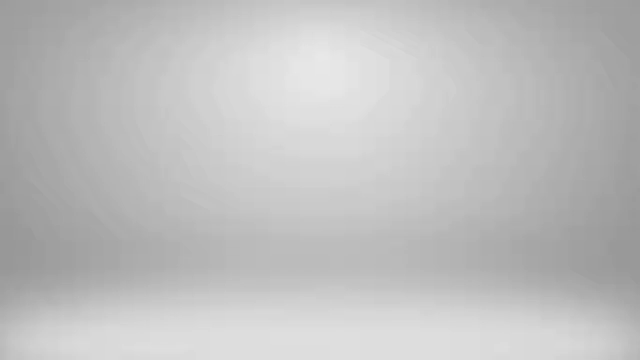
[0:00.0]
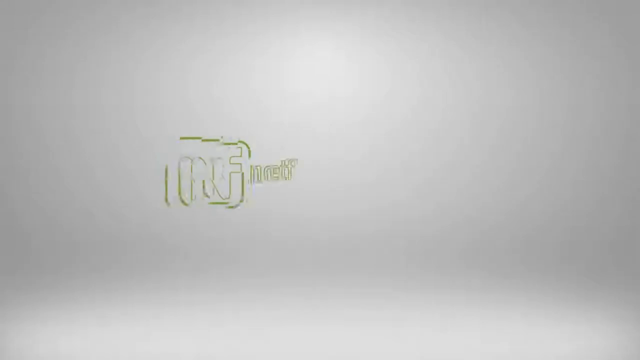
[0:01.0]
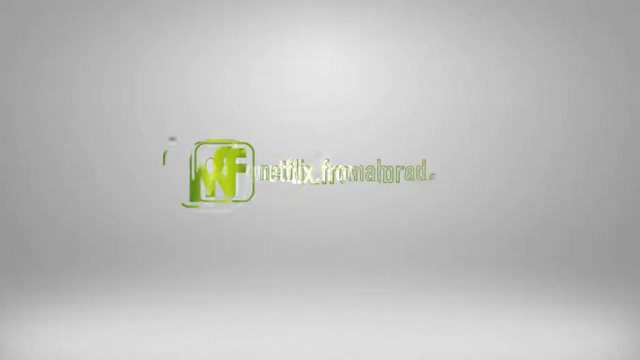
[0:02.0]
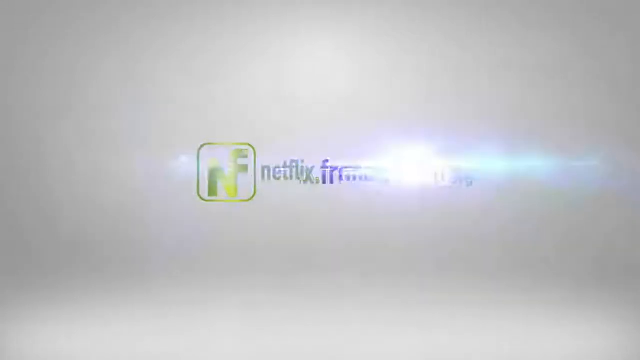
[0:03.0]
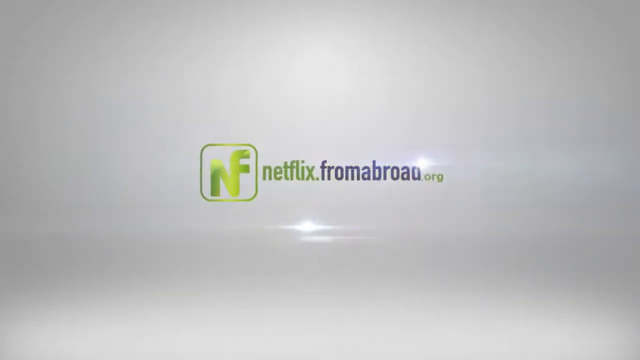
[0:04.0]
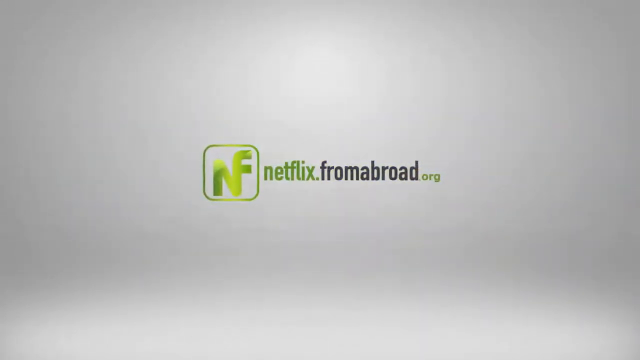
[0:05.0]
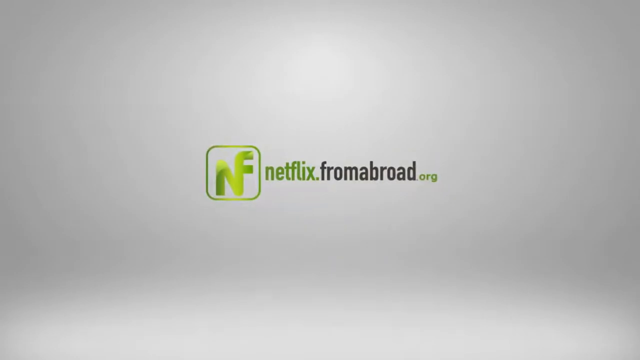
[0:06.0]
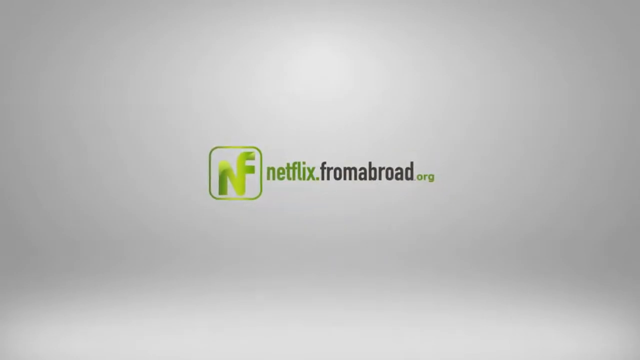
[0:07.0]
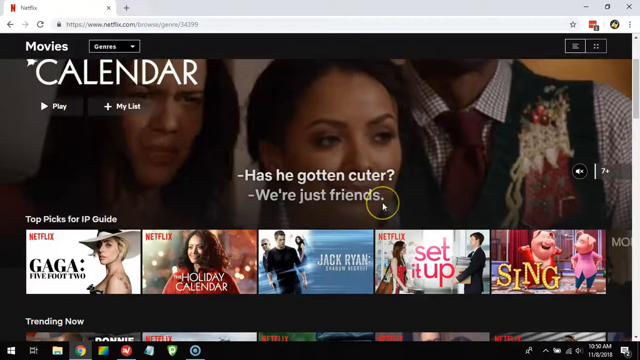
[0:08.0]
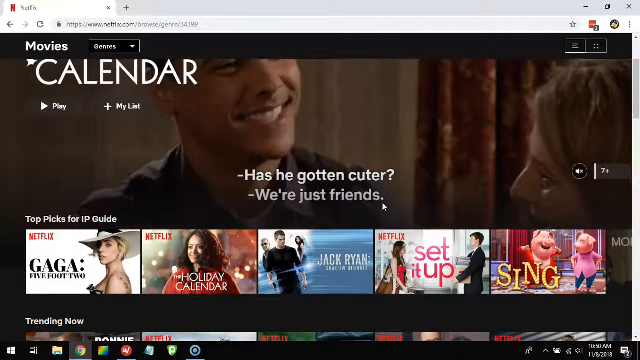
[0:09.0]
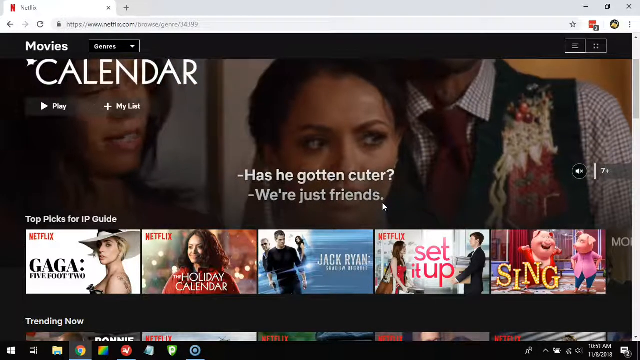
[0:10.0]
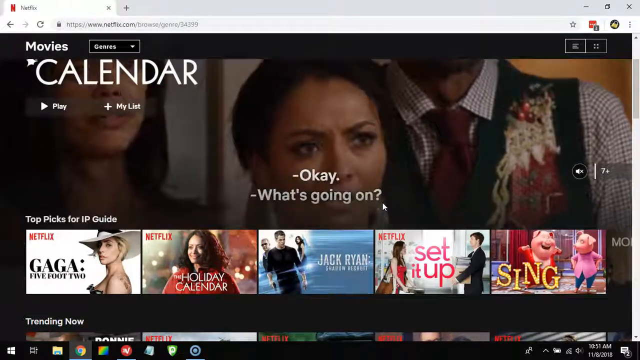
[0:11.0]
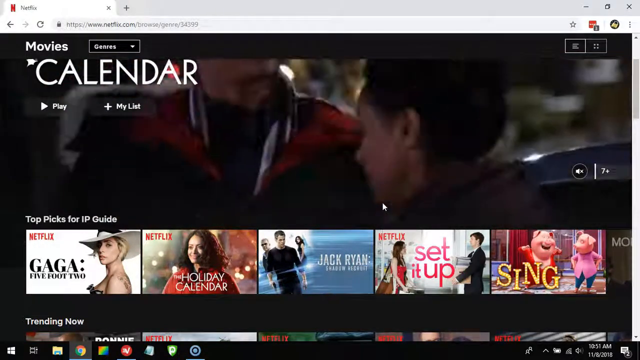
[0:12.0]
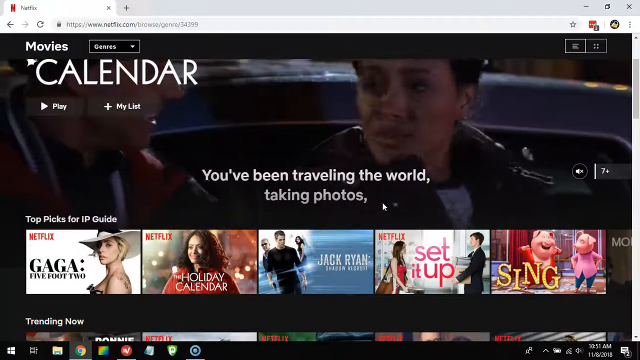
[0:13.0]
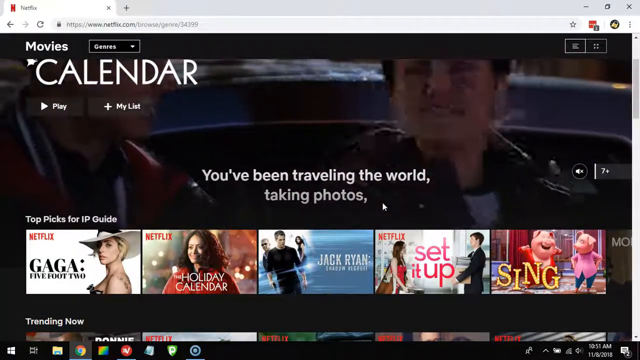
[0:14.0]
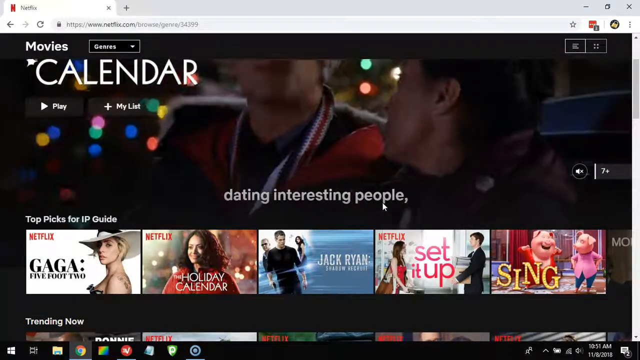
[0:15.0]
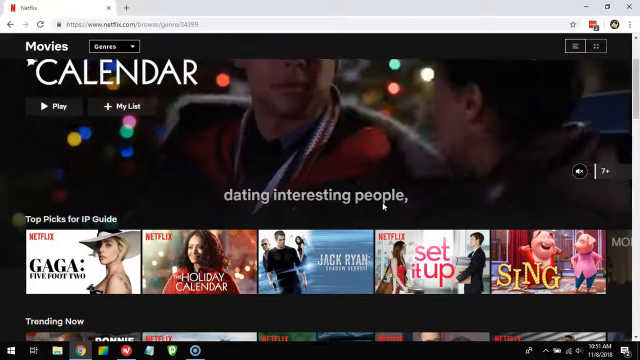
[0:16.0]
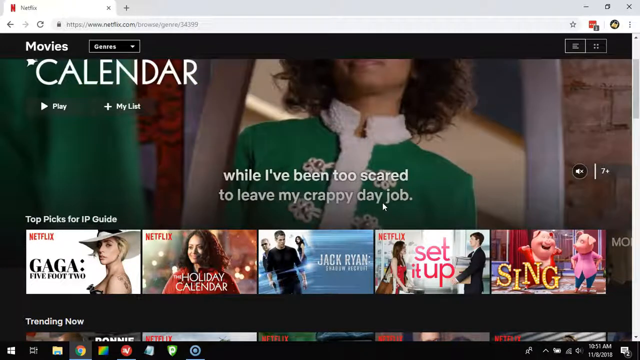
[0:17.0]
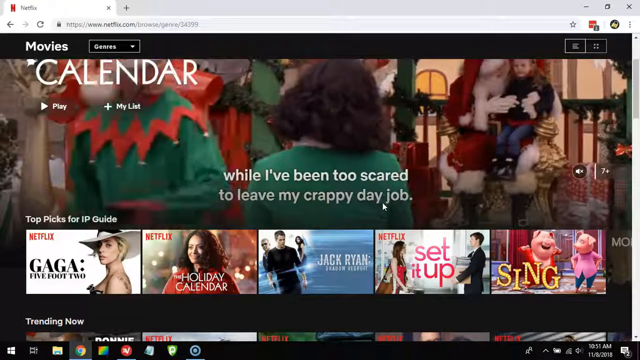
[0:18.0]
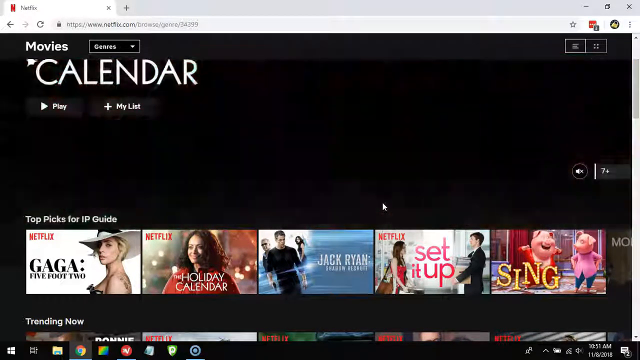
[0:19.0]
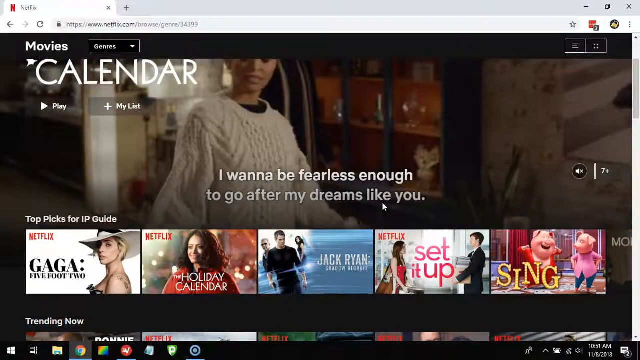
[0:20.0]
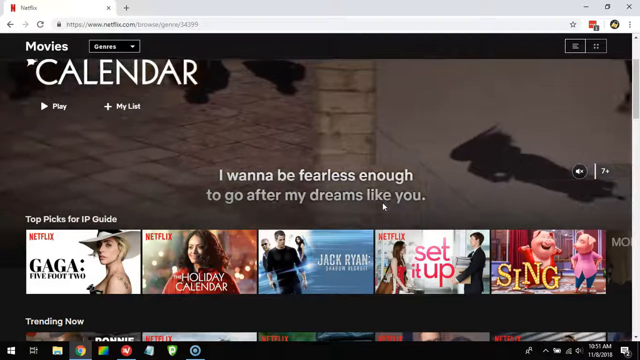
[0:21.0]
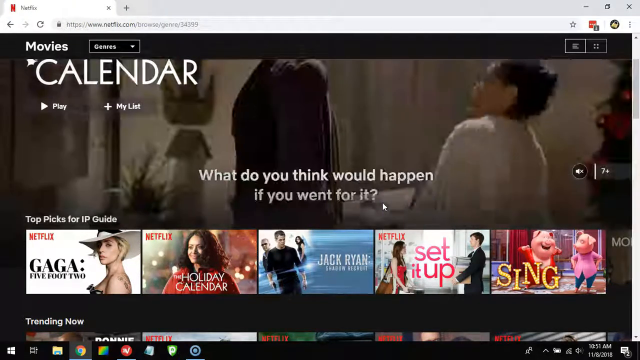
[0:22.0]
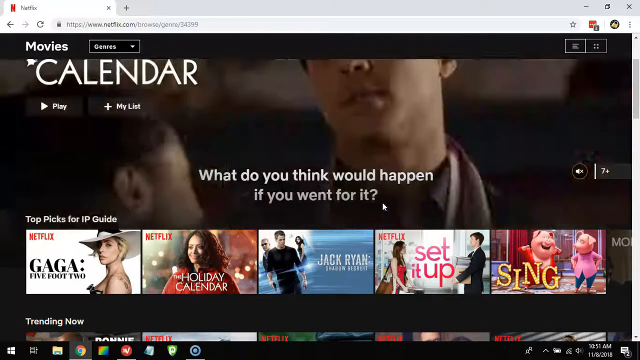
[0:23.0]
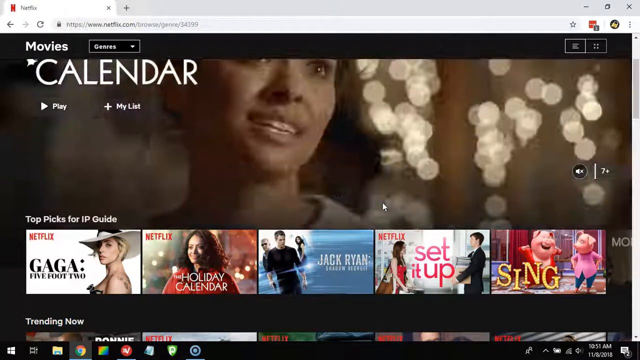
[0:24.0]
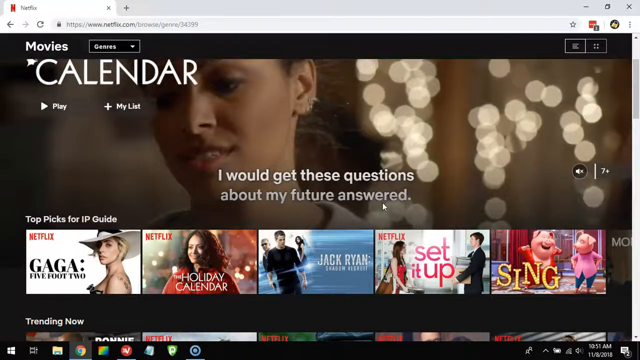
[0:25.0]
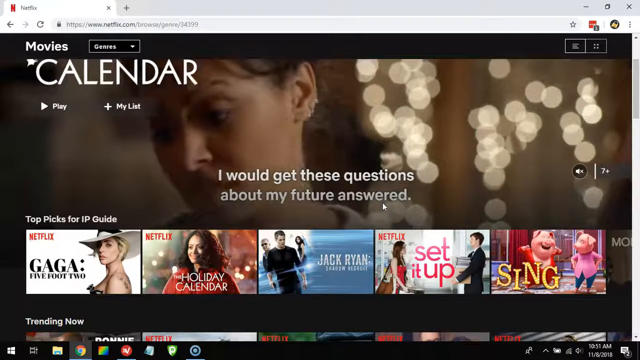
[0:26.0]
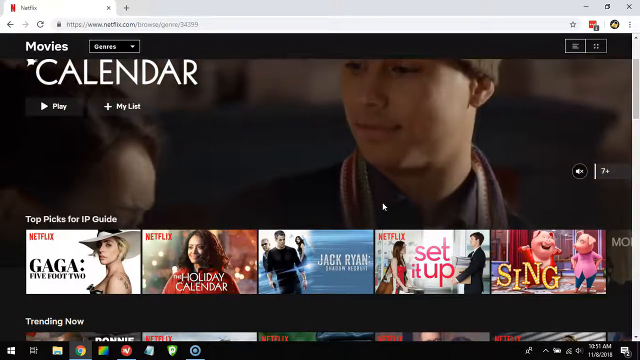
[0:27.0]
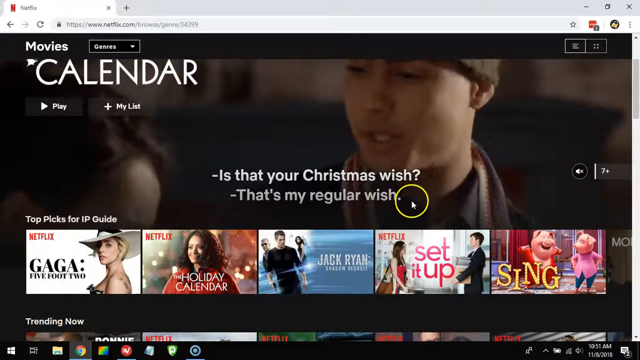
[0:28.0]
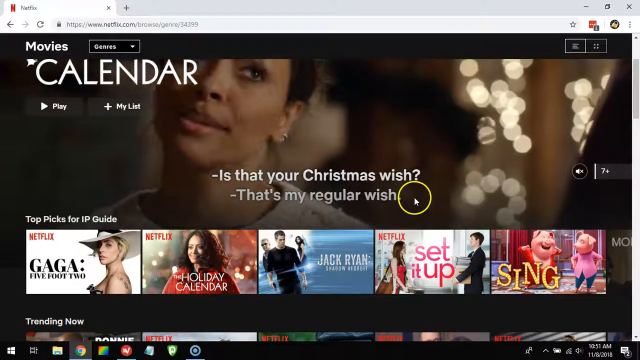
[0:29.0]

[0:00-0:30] A short intro sequence with a logo for netflix.fromabroad.org opens the video, followed by what looks like the Netflix homepage for browsing movies, with a genres button. A preview of The Holiday Calendar plays with subtitles. Categories are laid out to browse, the first being "top picks for IP guide," with selections including Gaga, The Holiday Calendar, Jack Ryan, Set It Up and Sing. Someone moves the mouse, and the cursor is visible. The site looks like it is in dark mode. The computer's toolbar runs along the bottom with other apps open, and the time and date are in the bottom right.